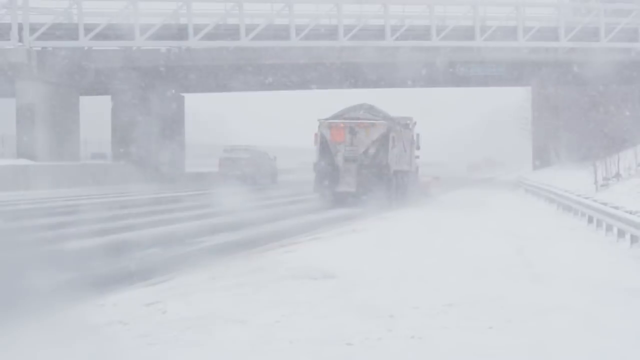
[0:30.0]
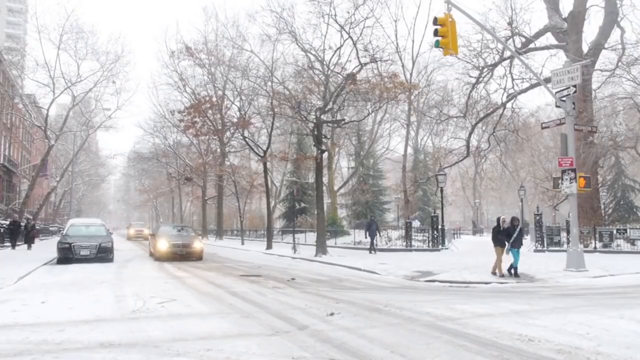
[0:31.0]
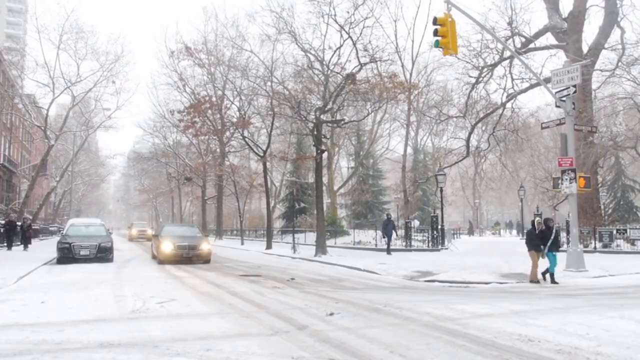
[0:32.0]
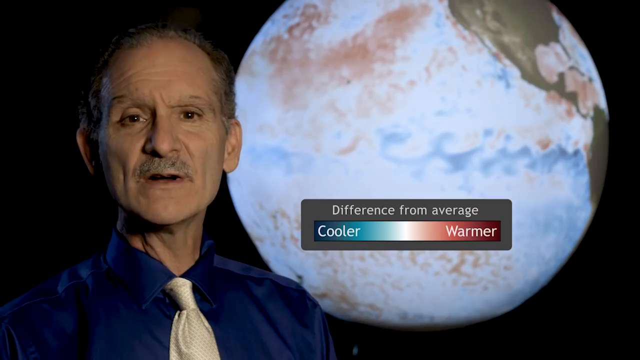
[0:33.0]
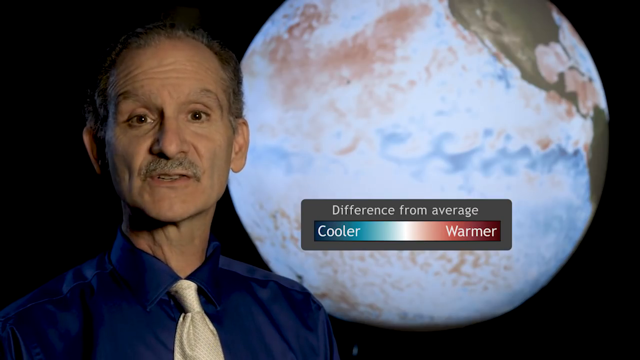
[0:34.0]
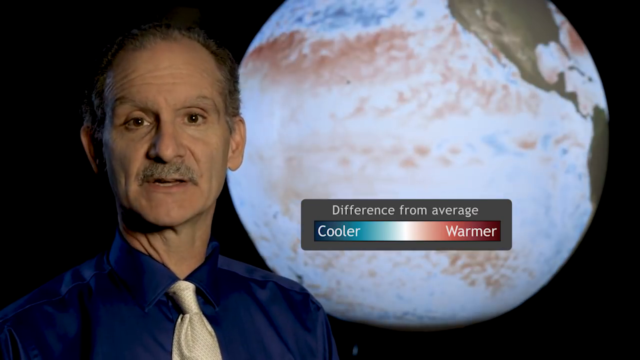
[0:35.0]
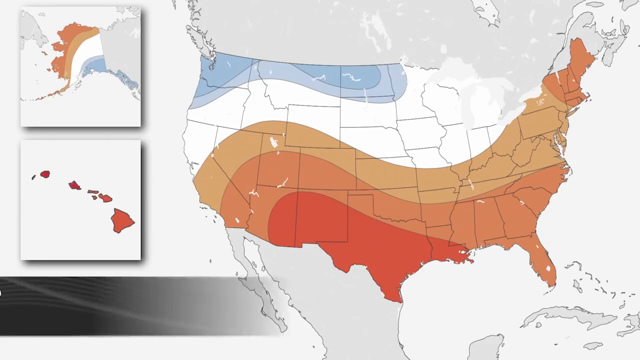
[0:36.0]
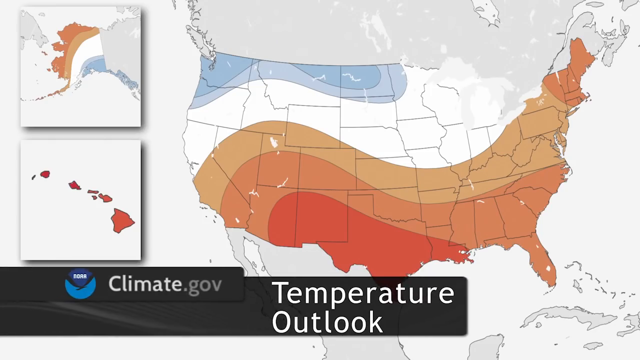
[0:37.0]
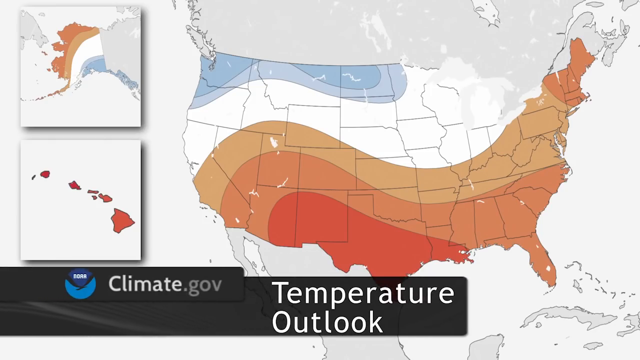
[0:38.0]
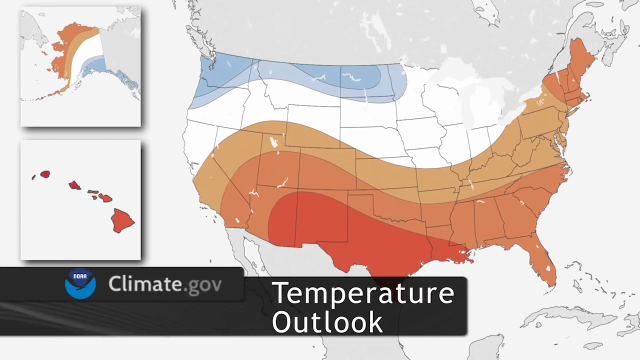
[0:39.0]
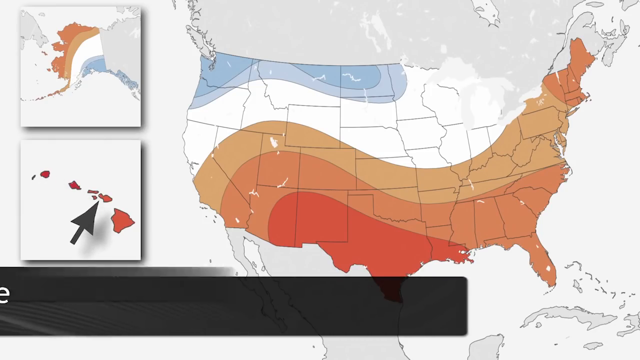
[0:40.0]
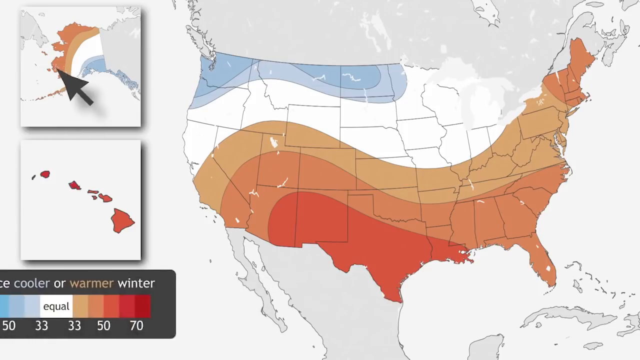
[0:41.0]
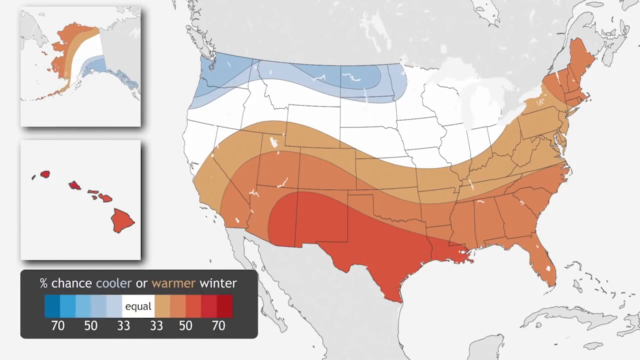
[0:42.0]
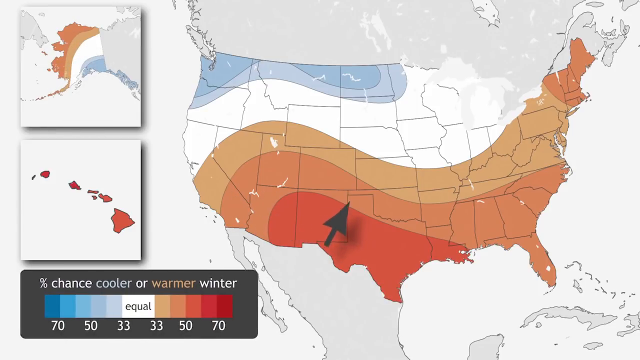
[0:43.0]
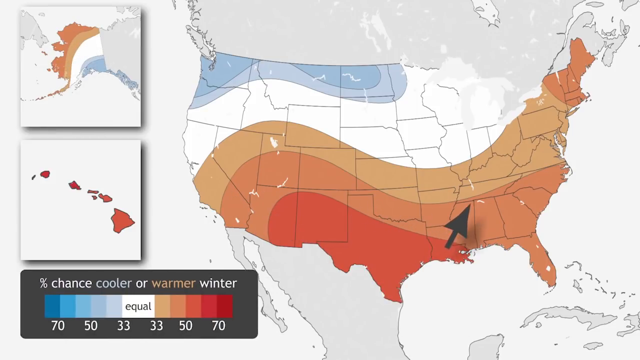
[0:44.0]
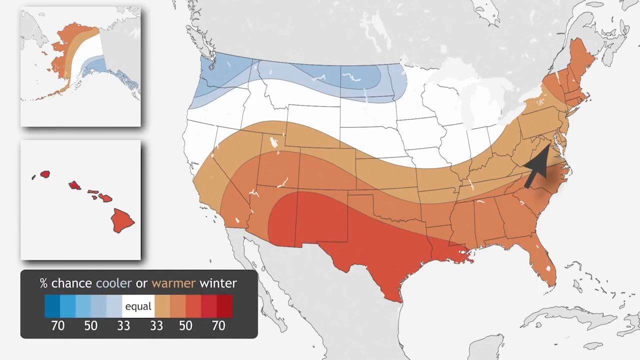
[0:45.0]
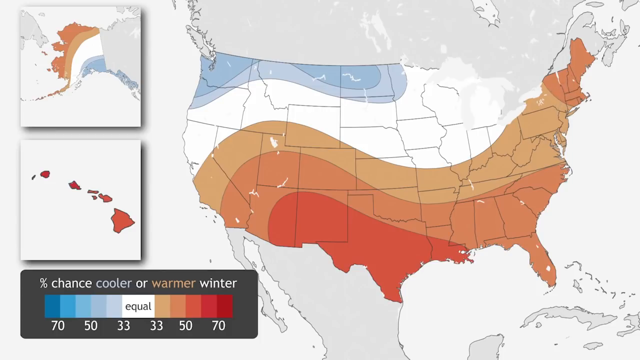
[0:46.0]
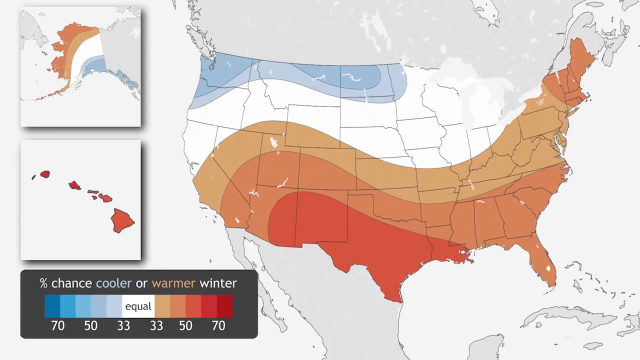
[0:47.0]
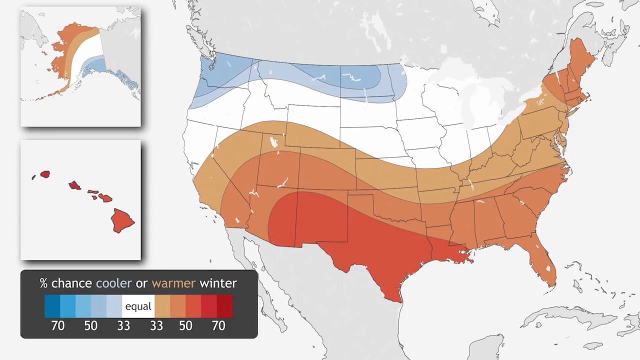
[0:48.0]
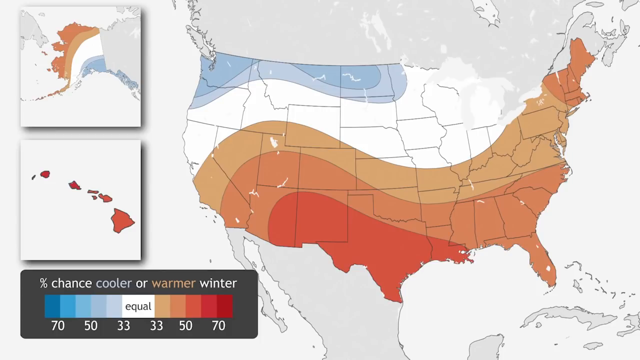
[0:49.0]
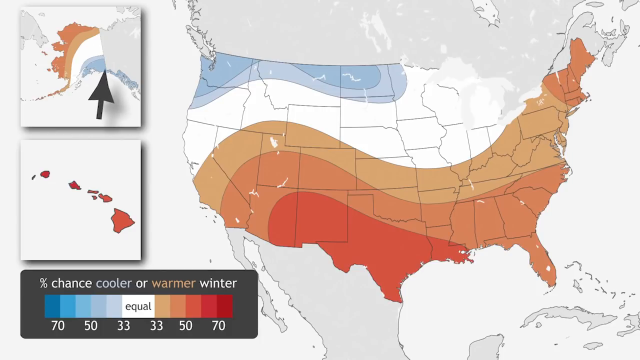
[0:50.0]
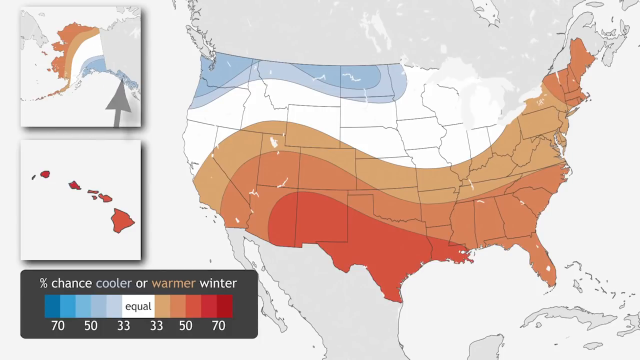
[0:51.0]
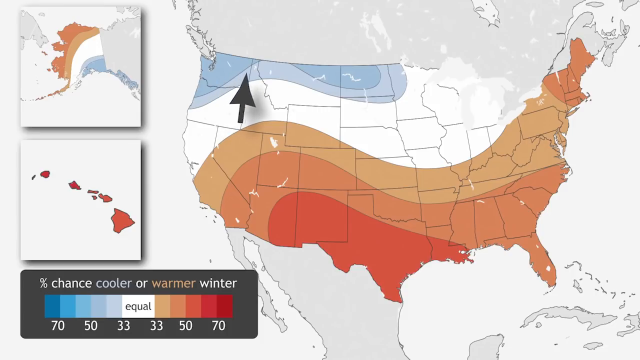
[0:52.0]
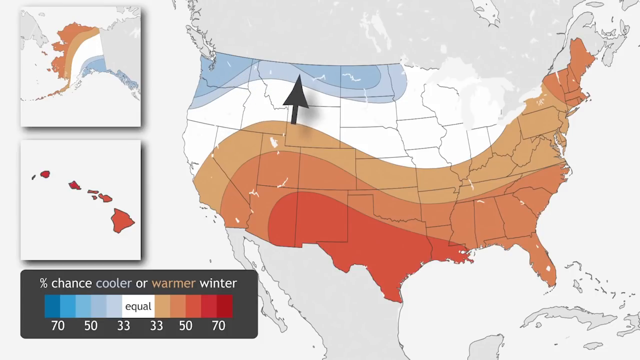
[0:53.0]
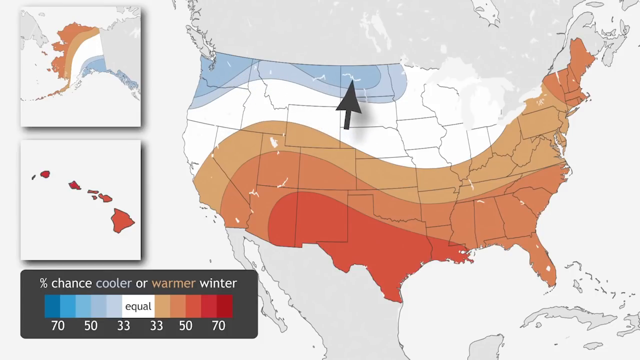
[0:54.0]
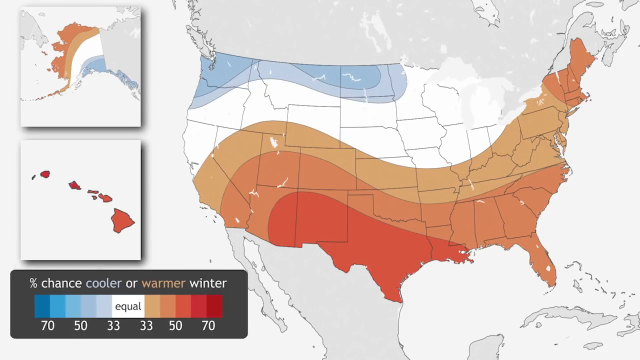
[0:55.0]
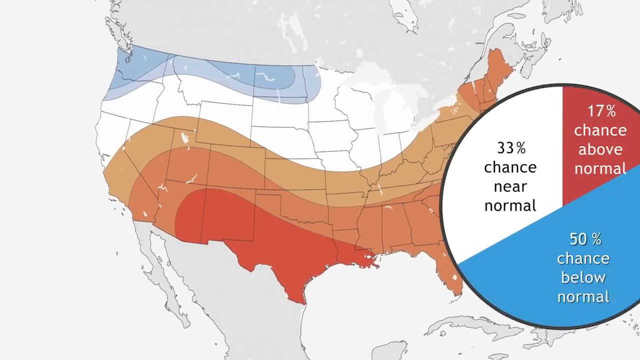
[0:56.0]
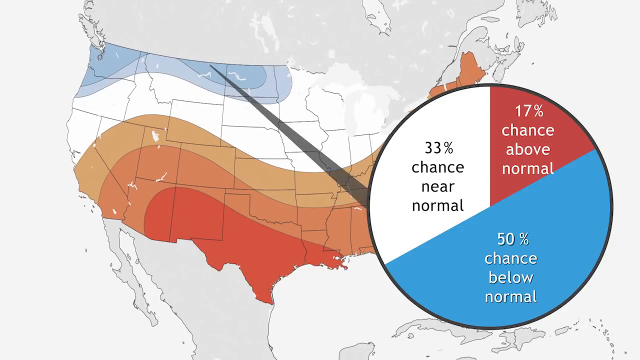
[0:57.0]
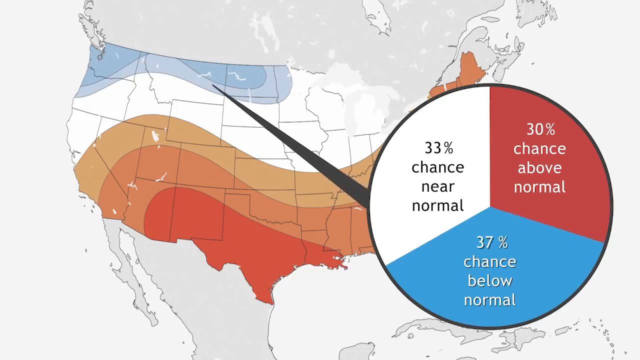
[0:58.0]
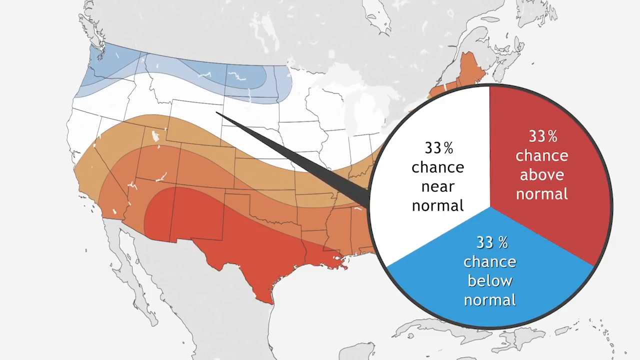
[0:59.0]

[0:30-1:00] On the highway, a large truck goes through a blizzard; it looks like it is loaded with gravel or coal or something, and it goes under and over snow. A shot follows of what may be a park in Washington DC, with people walking and cars going down the road with their lights on, surrounded by buildings. The man who presented the video is speaking again; he wears a blue shirt with a silver tie and is kind of an older gentleman with a mustache, an employee or spokesperson for climate.gov. A temperature outlook for the United States is shown, with the southern and western states much warmer than the northern states, the opposite for Alaska, and Hawaii pretty temperate, illustrated with diagrams. A color chart showing the temperature changes is at the bottom of the screen. Up north there is a 50% chance of below normal, a 33% chance of near normal and a 17% chance of above normal.